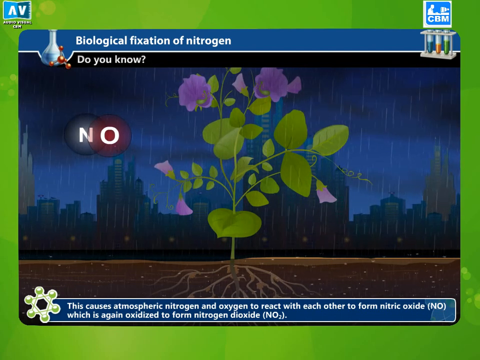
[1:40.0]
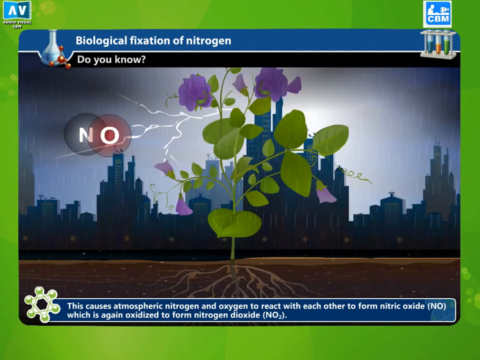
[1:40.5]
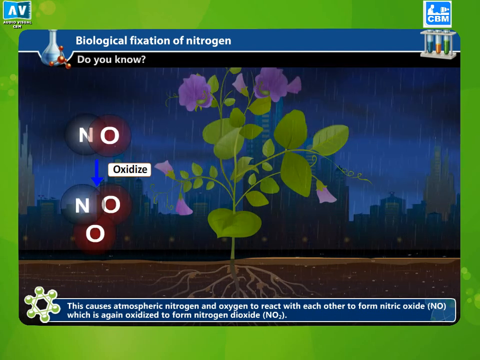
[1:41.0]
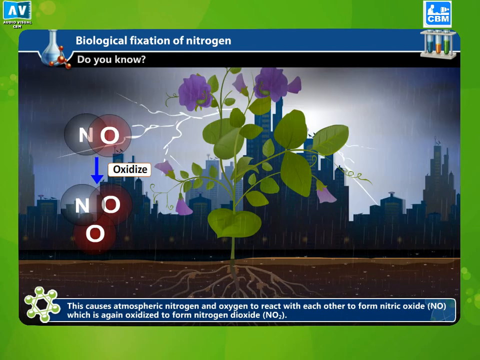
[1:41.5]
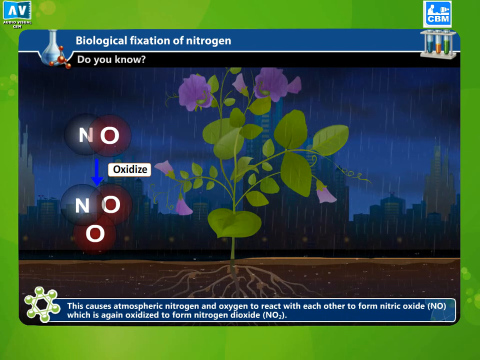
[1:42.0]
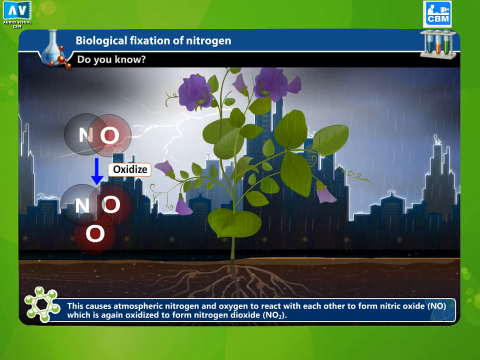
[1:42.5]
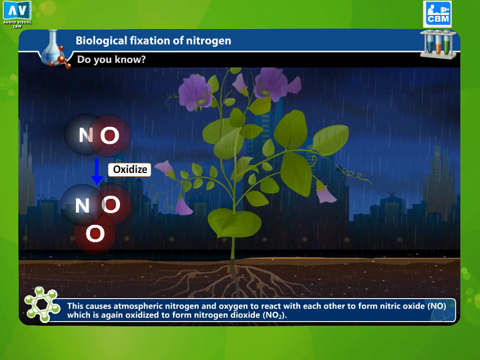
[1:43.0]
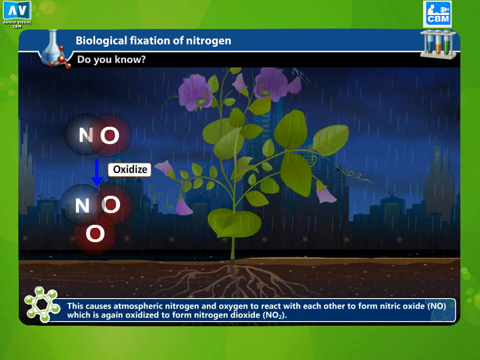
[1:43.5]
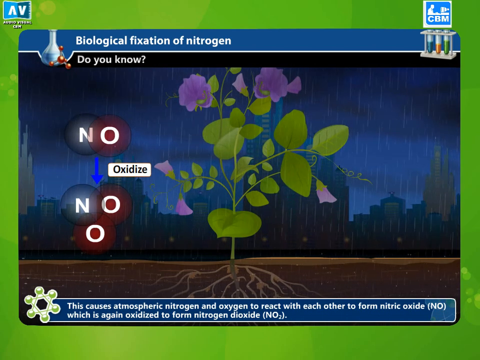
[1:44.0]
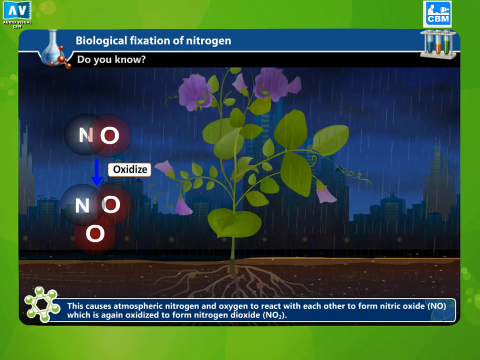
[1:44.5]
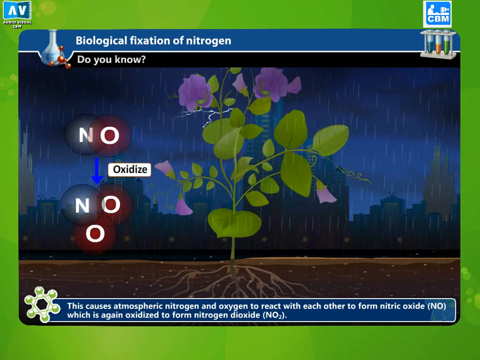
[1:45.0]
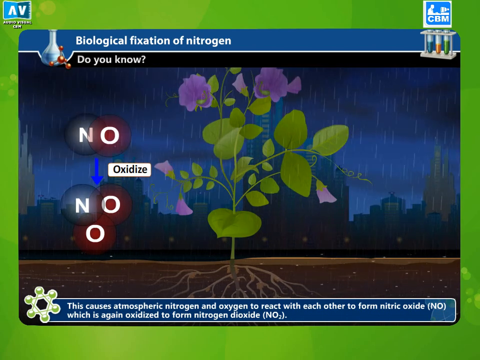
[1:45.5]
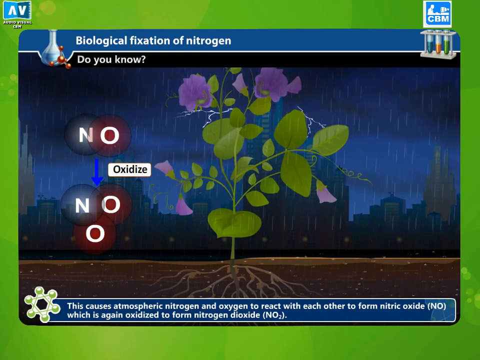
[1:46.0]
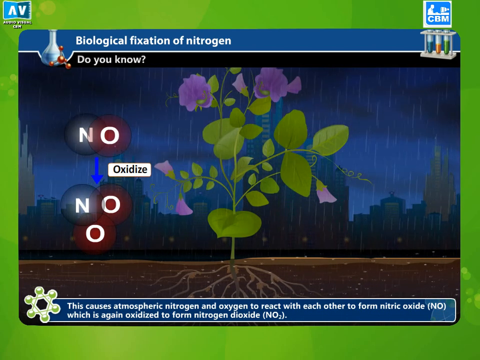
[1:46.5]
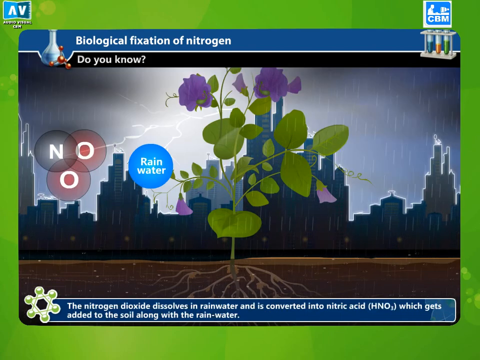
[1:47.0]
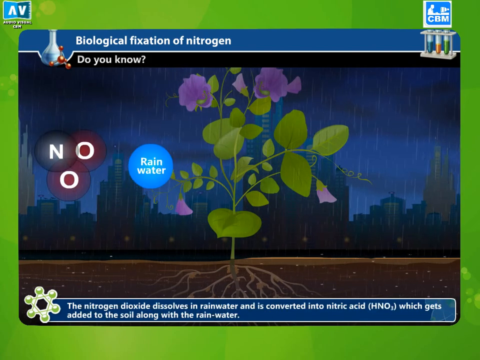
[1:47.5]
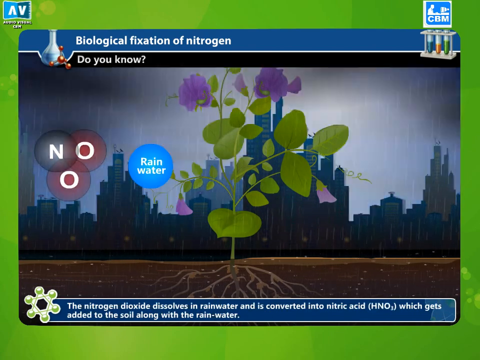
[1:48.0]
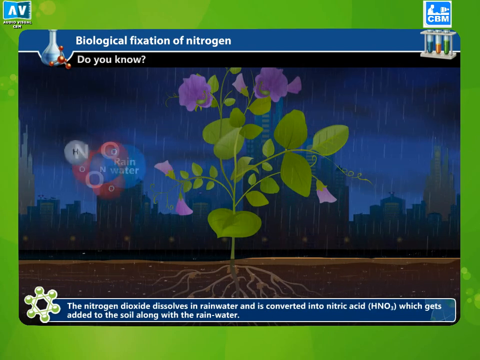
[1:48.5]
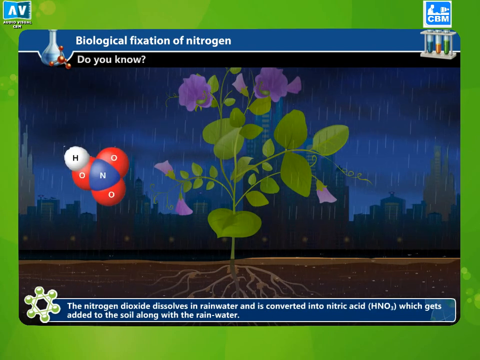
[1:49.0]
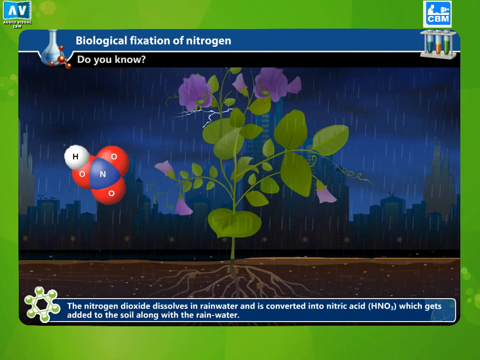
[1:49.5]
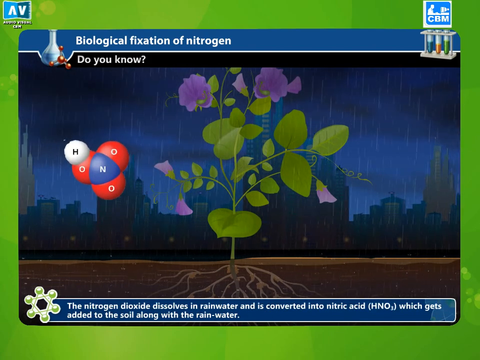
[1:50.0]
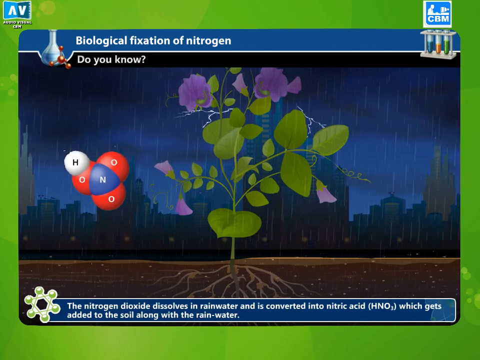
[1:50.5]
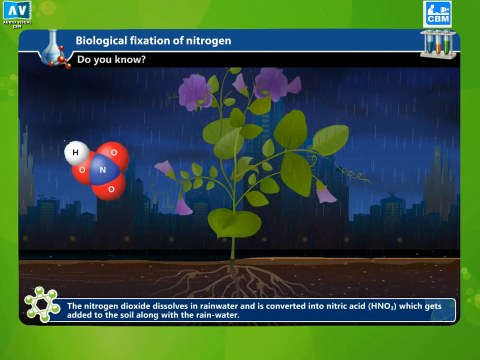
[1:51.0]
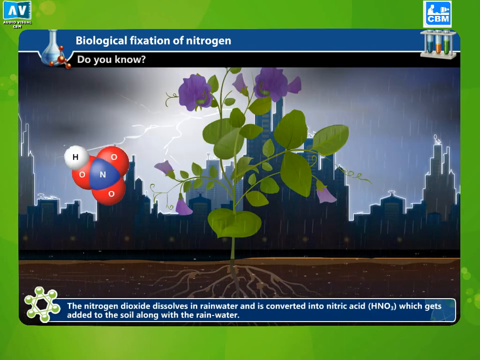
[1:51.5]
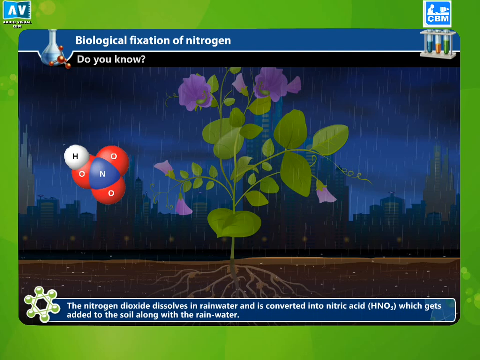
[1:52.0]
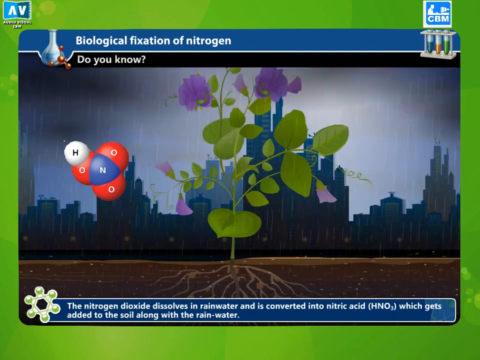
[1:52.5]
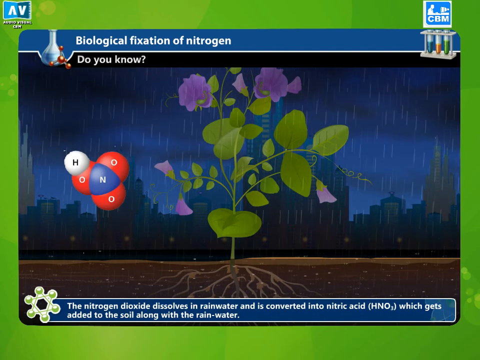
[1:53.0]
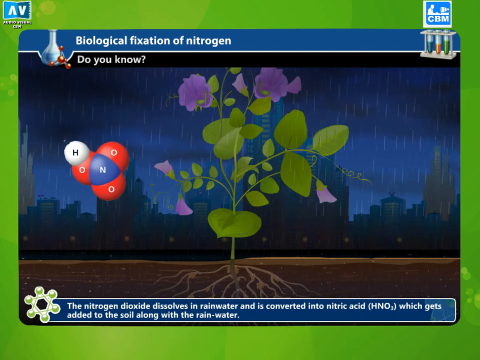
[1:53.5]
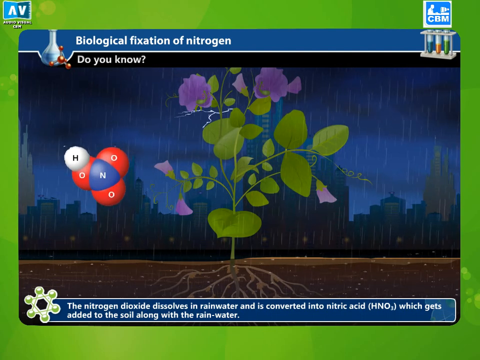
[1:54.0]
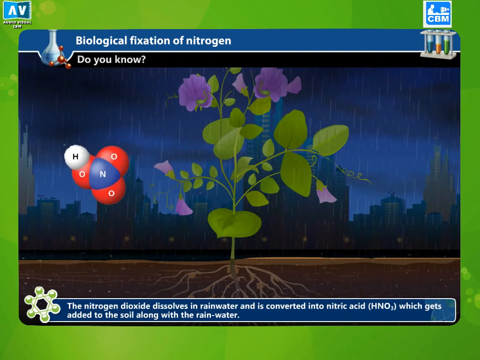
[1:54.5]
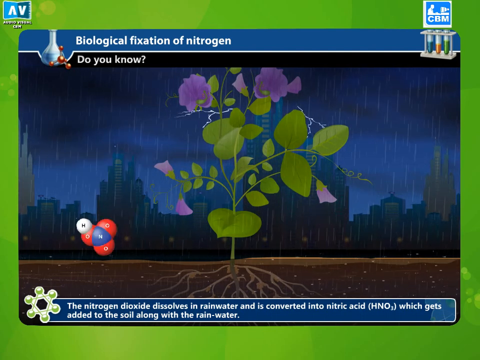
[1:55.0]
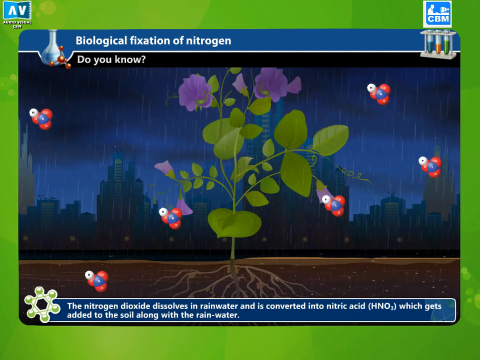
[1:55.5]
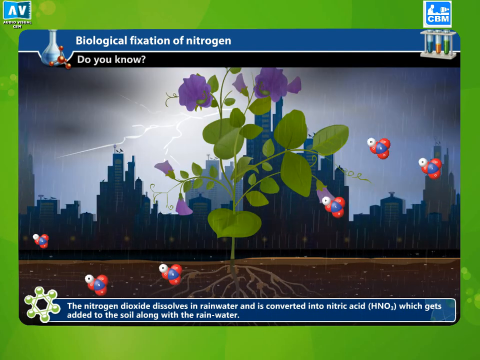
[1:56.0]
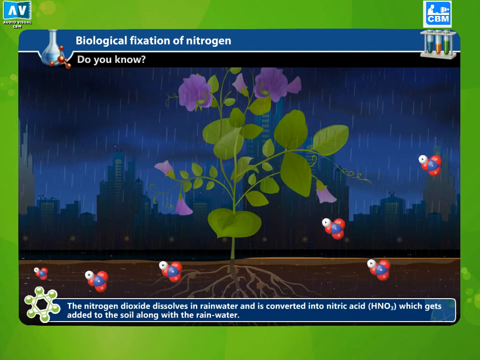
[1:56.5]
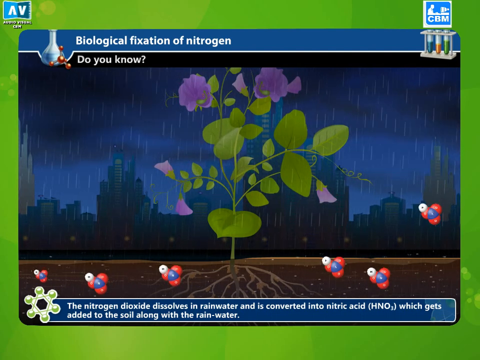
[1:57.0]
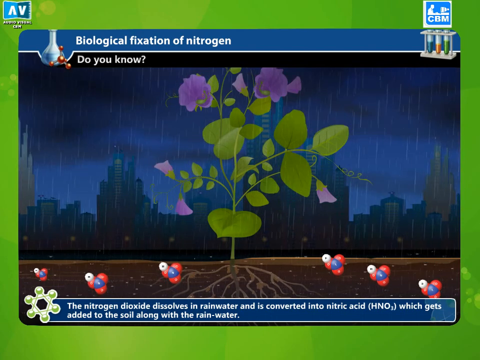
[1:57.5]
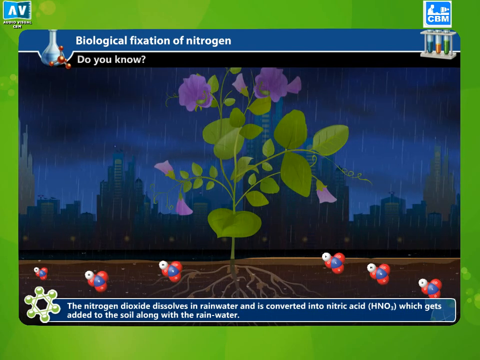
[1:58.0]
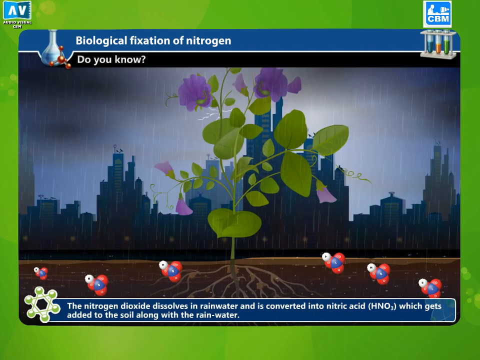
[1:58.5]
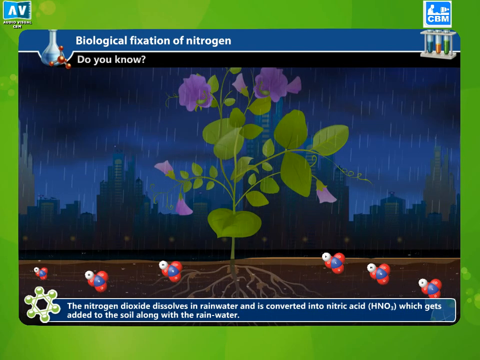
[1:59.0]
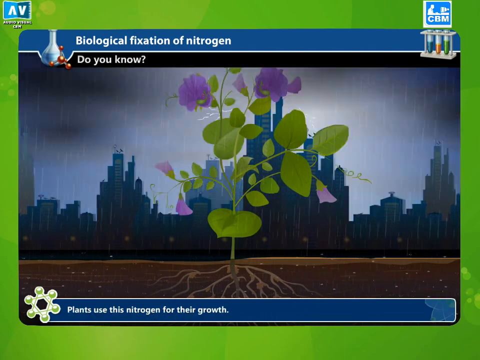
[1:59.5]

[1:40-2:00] A cartoonish illustration shows a nighttime scene with a city in the background; many cities can be seen in the background. In the foreground is a green plant with purple flowers, with its roots shown underground in brown dirt. The illustration is surrounded by a green border. At the very top left are the letters "A-V," and at the very top right the letters "C-B-M." Below the C-B-M is a vial holder with three vials: the left has a dark green fluid, the middle an orange fluid, and the right a regular green fluid. A blue banner at the top of the illustration reads "biological fixation of nitrogen," and text reads "do you know?" At the bottom, white text on a blue banner reads "this causes atmospheric nitrogen and oxygen to react with each other to form nitric oxide, which is again oxidized to form nitrogen dioxide." It is raining in the background, and there is lightning.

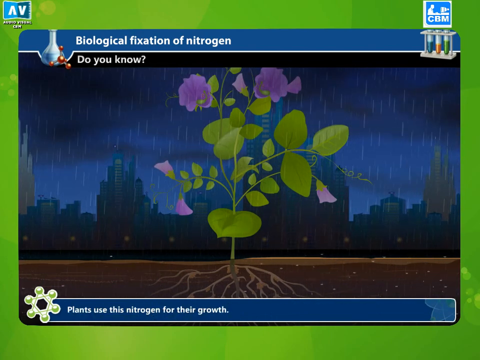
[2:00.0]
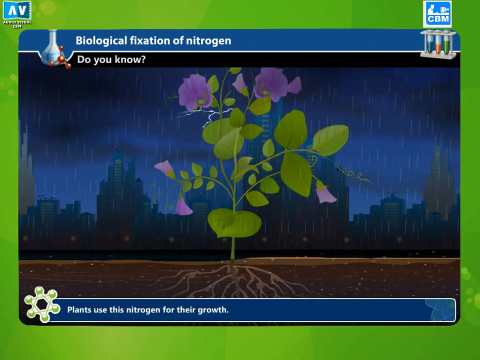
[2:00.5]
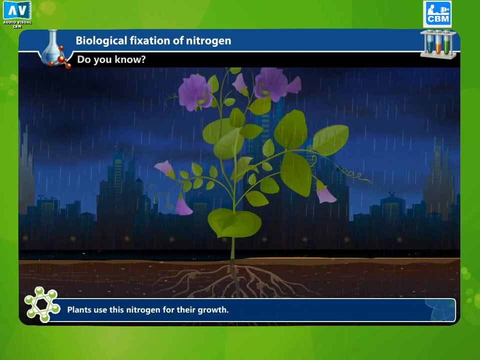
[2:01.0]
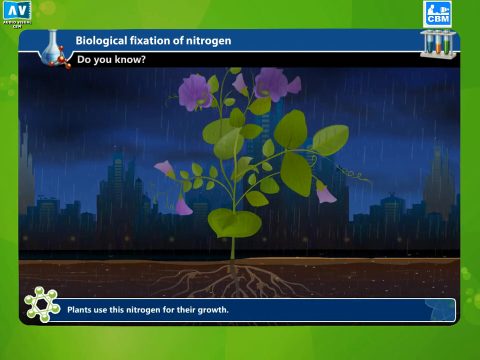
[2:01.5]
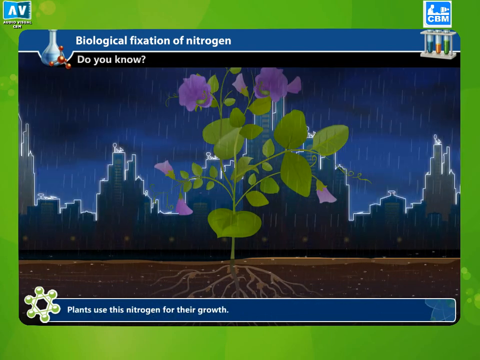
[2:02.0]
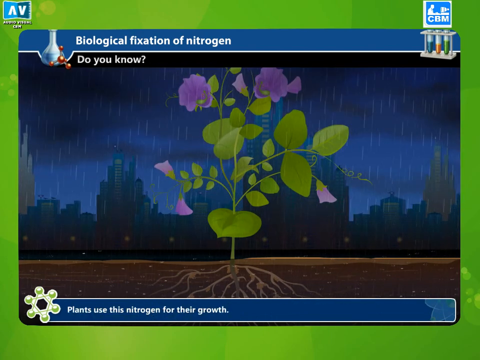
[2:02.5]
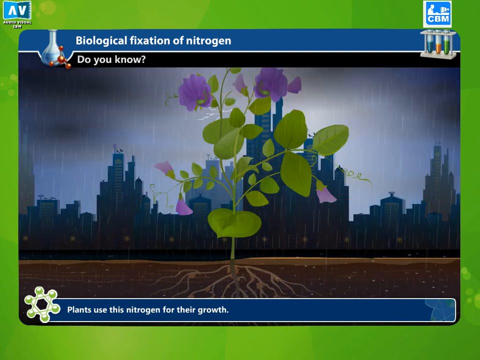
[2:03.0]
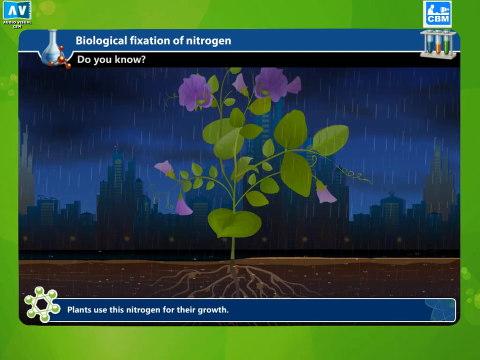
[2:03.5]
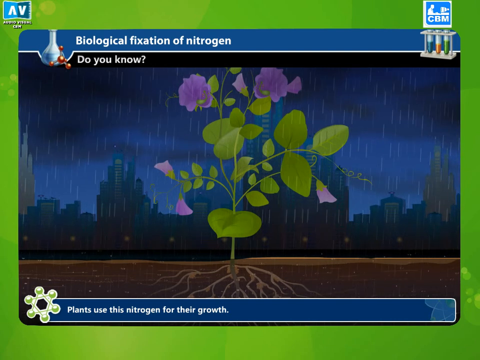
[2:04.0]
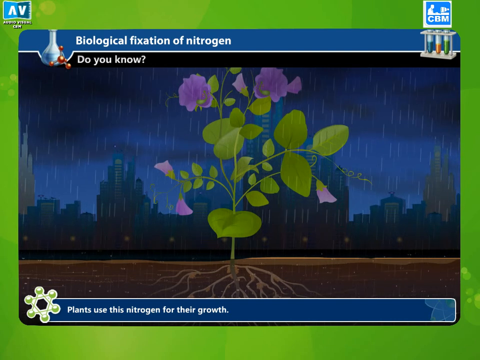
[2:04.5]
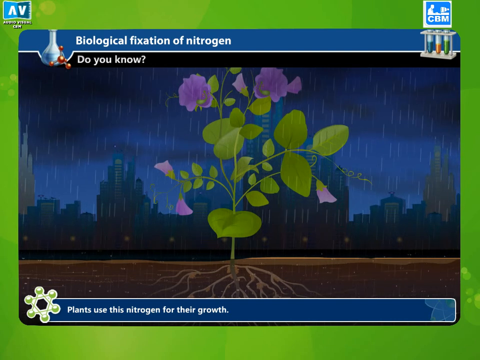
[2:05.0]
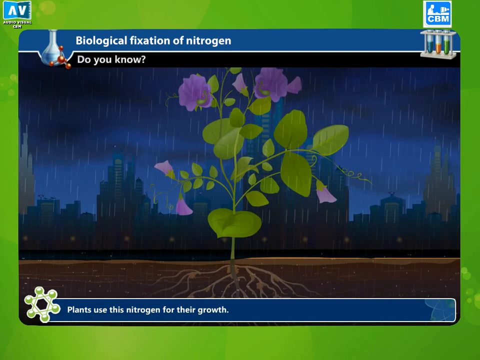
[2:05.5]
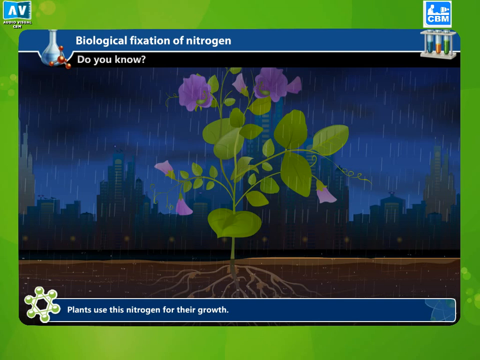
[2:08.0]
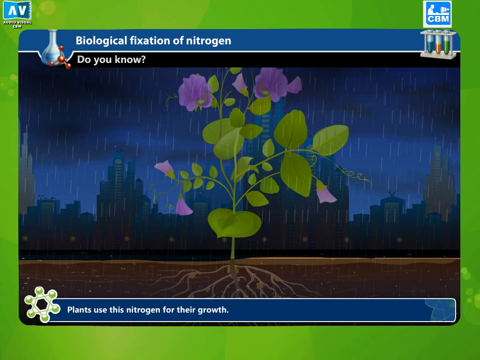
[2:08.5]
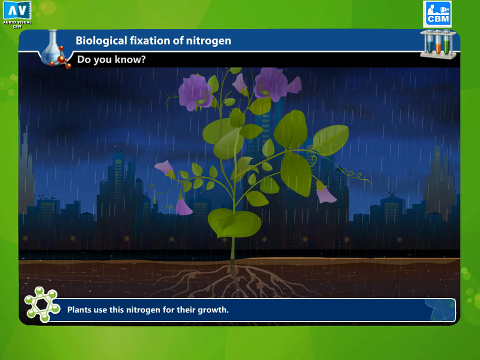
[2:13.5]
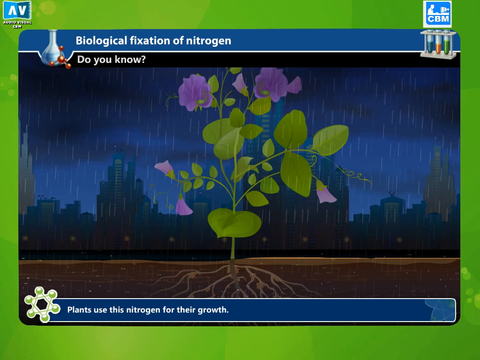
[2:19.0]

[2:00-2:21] A city is in the far background, with rain and lightning. In the foreground is a green plant with purple flowers, and the cartoonish illustration shows its roots under brown dirt. The entire illustration is surrounded by a green border. At the top left of the screen is "A-V," and at the top right "C-B-M." Below the C-B-M are three vials in a holder, each with a different fluid: one dark green, one orange, and one regular green. At the top, above the illustration, a blue banner with white text reads "biological fixation of nitrogen," and a black banner underneath it reads "do you know?" in white text. At the bottom of the illustration, another blue banner with white text reads "plants use this nitrogen for their growth."